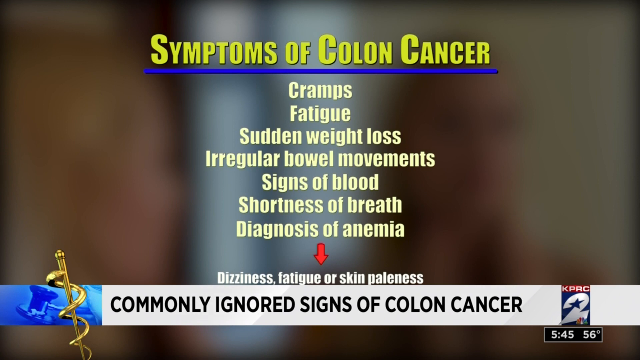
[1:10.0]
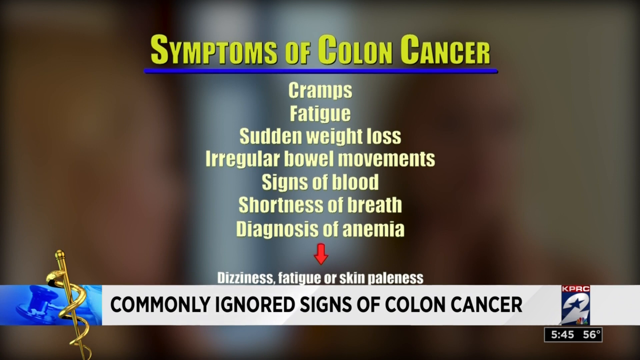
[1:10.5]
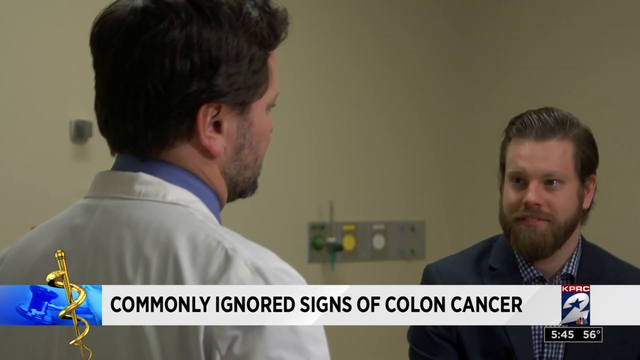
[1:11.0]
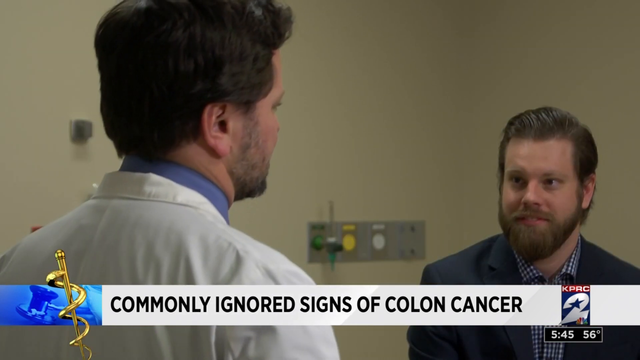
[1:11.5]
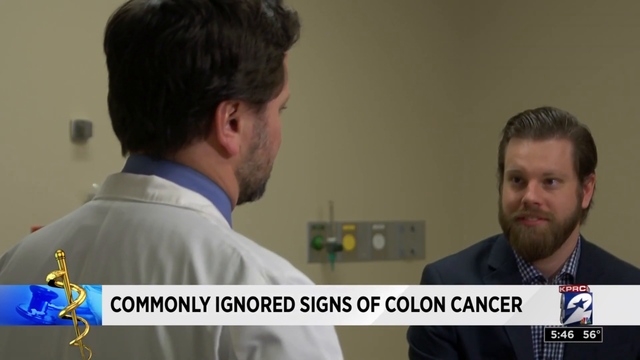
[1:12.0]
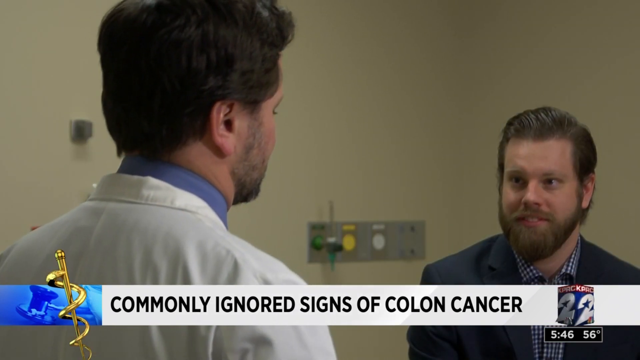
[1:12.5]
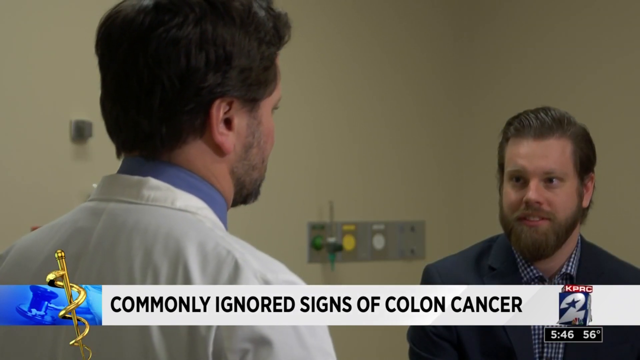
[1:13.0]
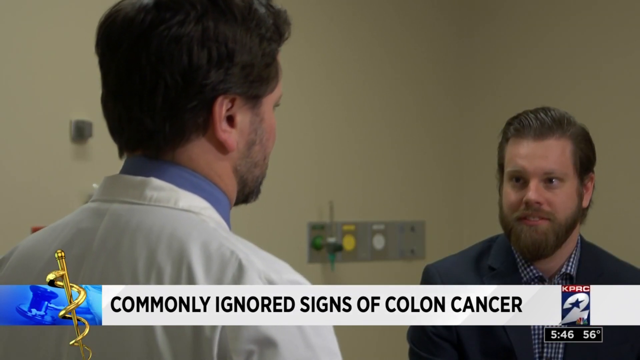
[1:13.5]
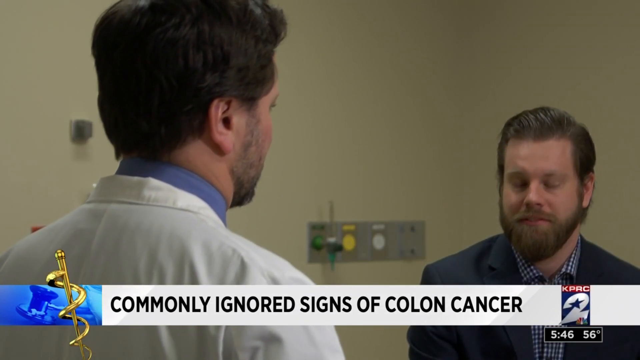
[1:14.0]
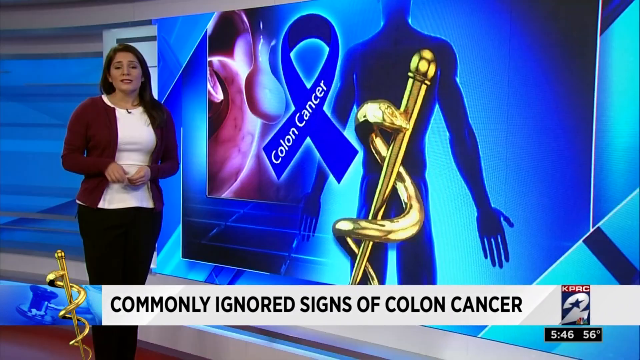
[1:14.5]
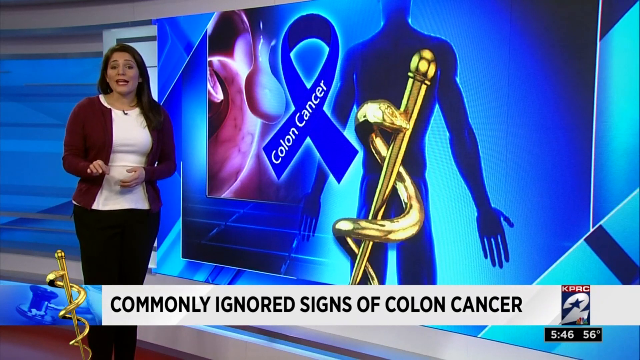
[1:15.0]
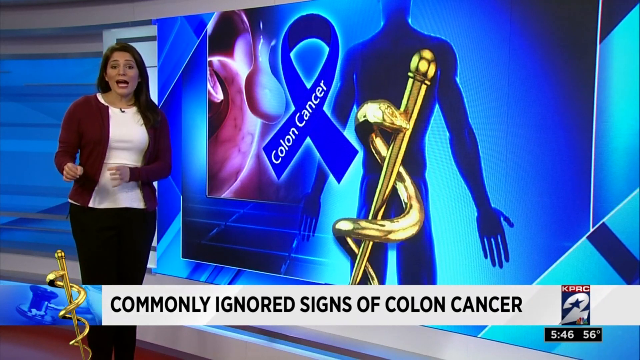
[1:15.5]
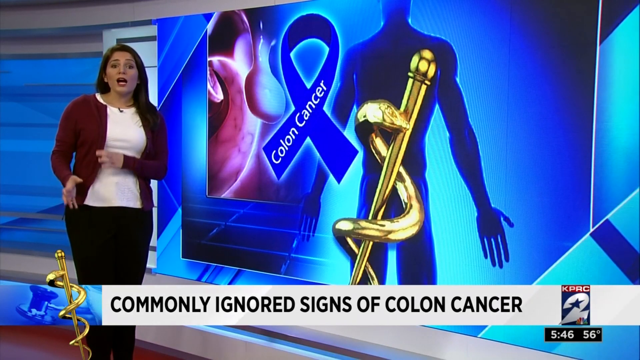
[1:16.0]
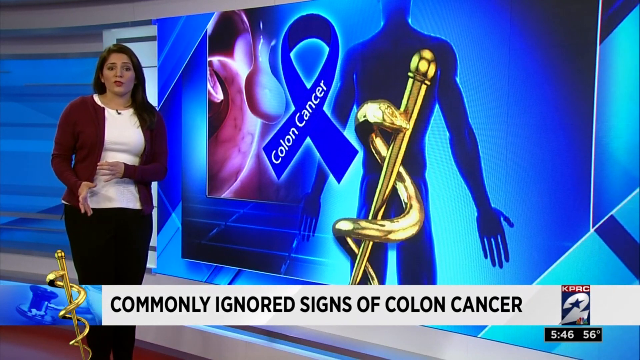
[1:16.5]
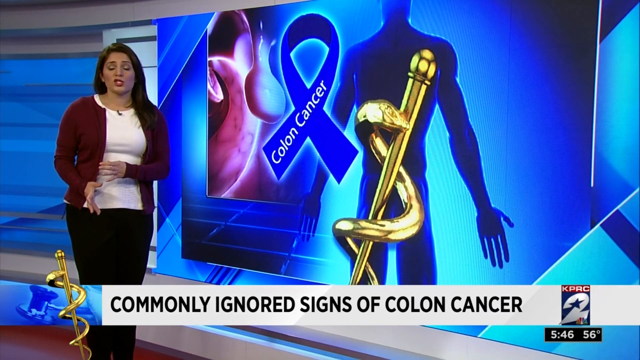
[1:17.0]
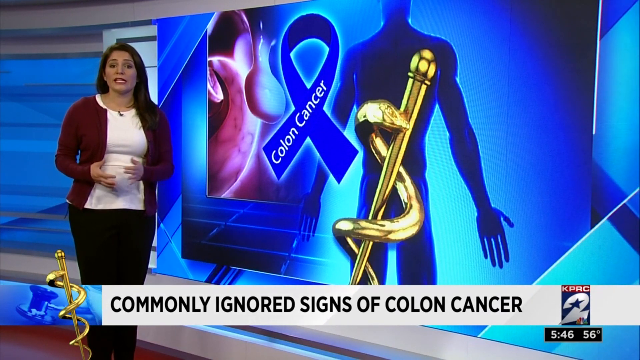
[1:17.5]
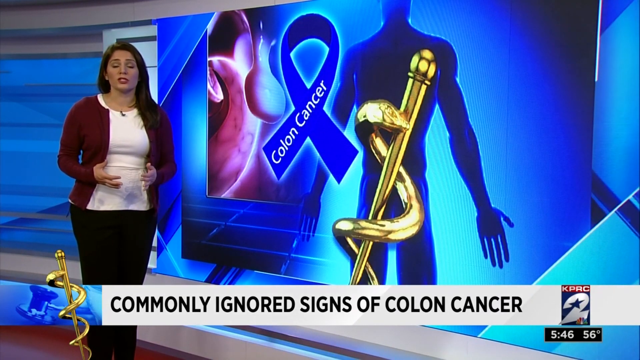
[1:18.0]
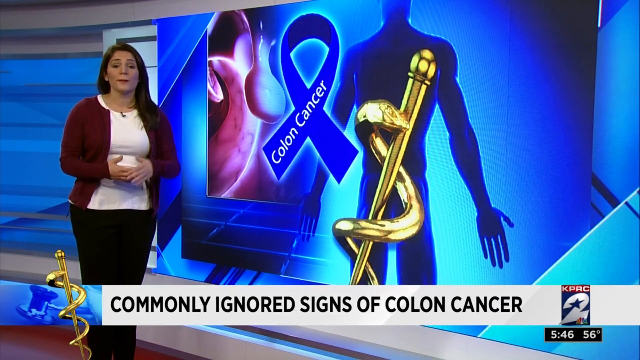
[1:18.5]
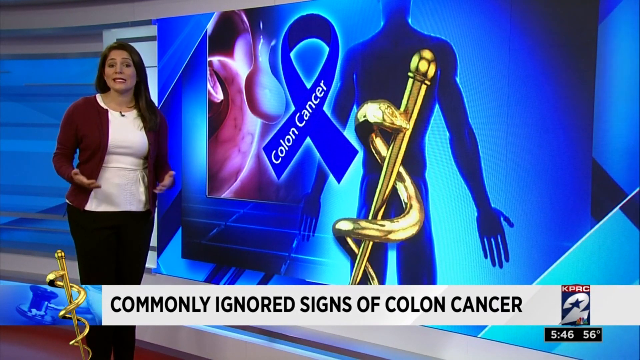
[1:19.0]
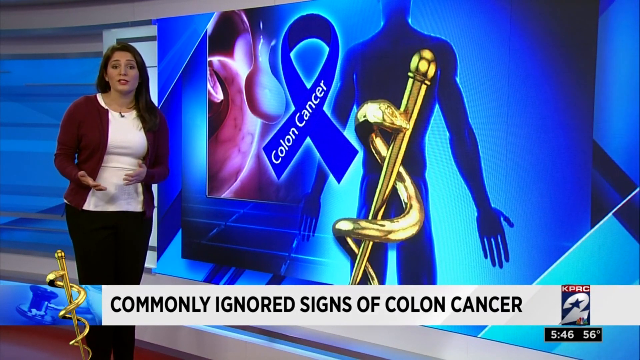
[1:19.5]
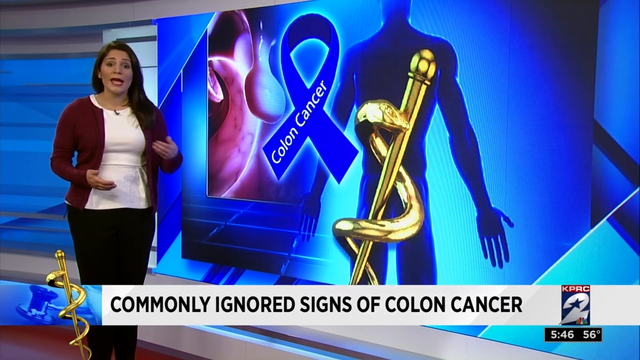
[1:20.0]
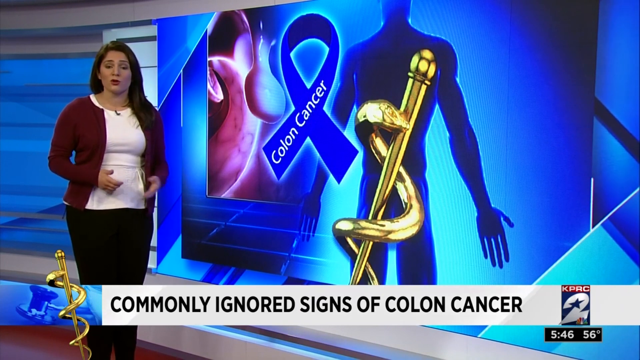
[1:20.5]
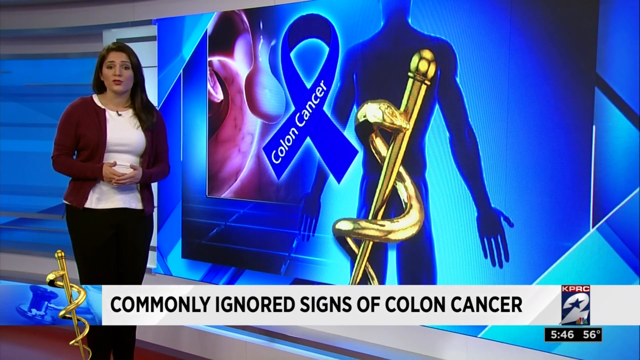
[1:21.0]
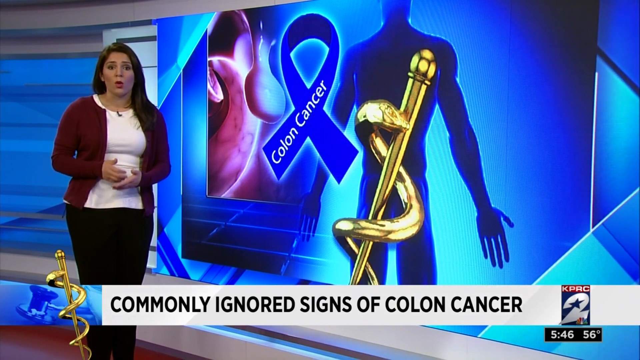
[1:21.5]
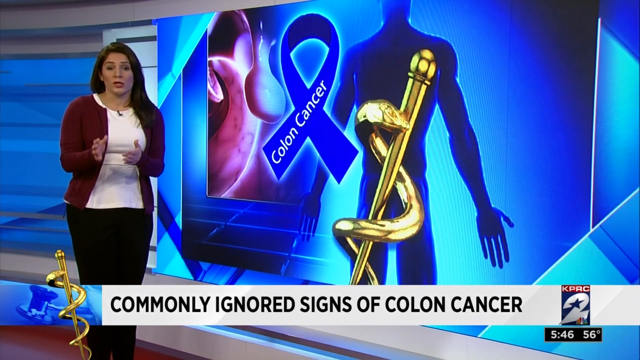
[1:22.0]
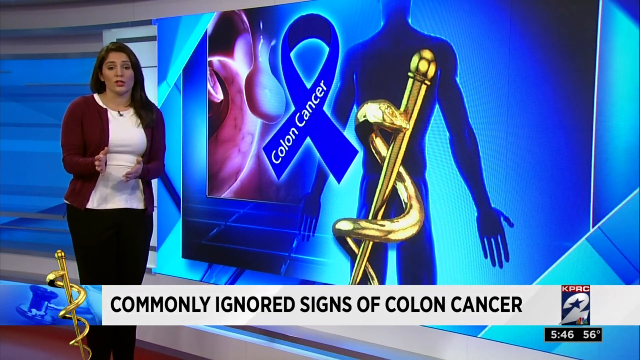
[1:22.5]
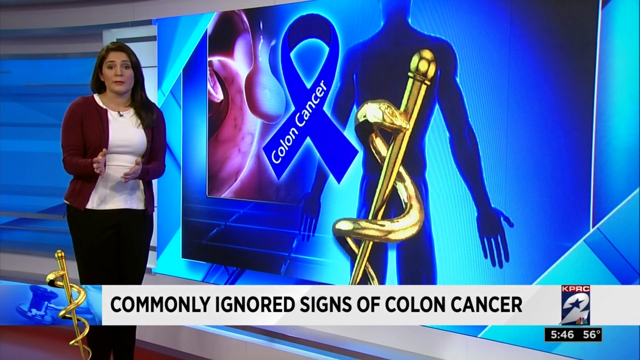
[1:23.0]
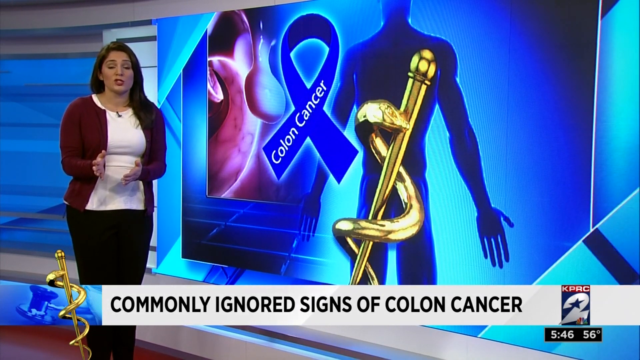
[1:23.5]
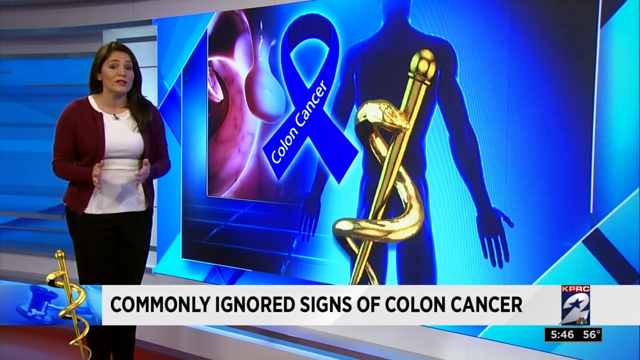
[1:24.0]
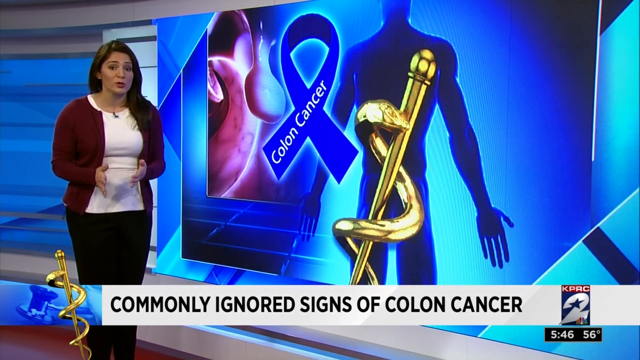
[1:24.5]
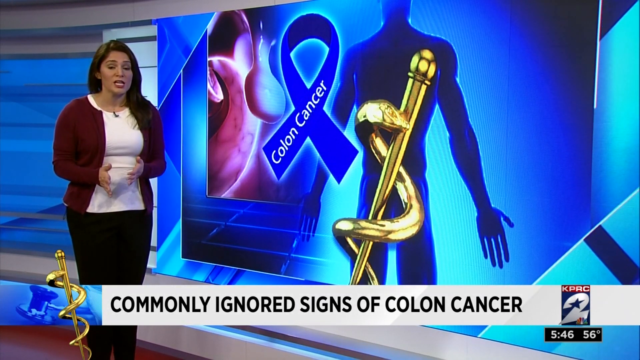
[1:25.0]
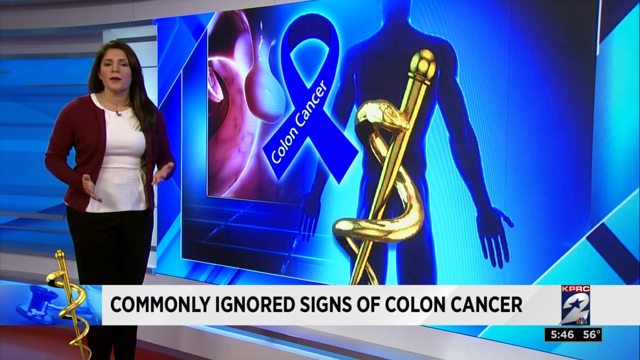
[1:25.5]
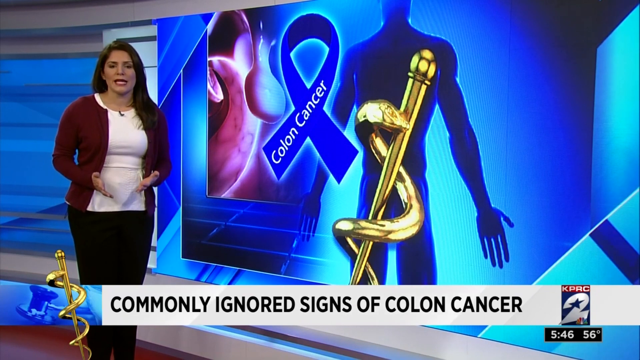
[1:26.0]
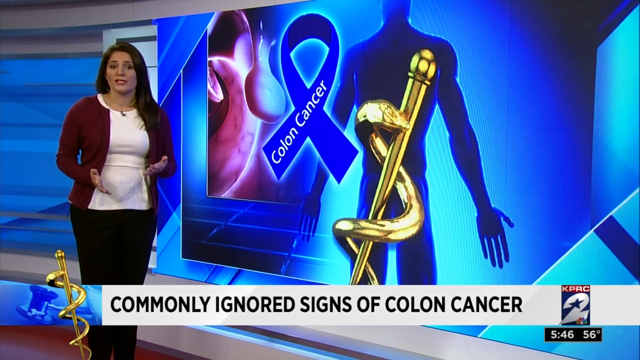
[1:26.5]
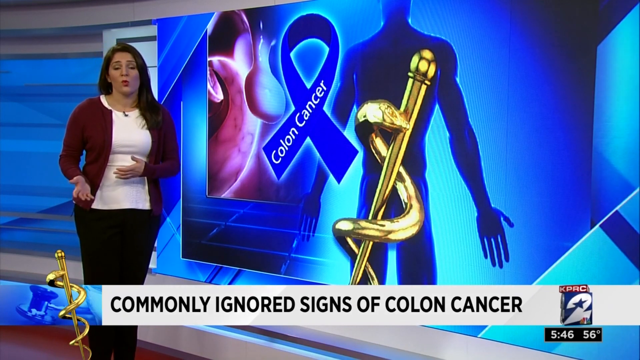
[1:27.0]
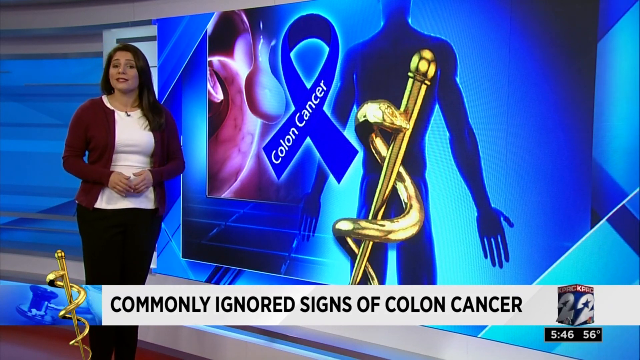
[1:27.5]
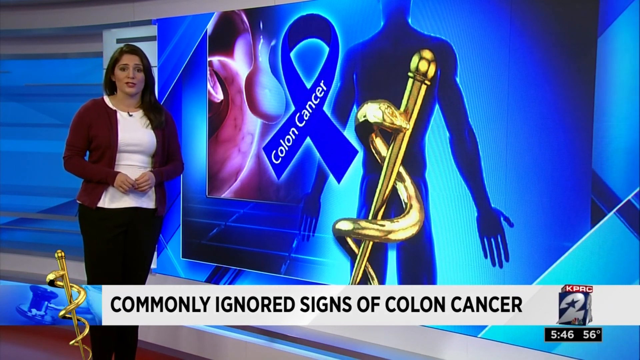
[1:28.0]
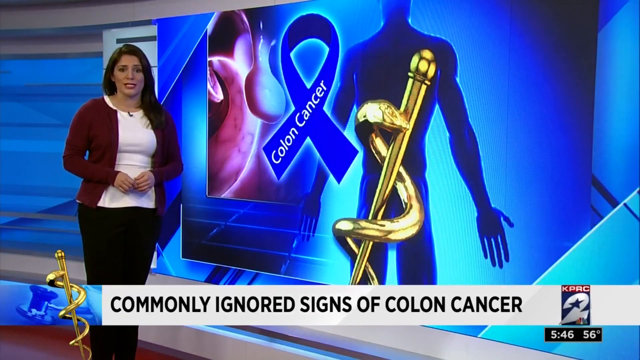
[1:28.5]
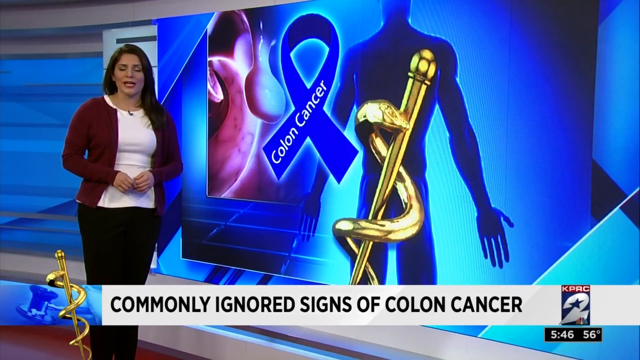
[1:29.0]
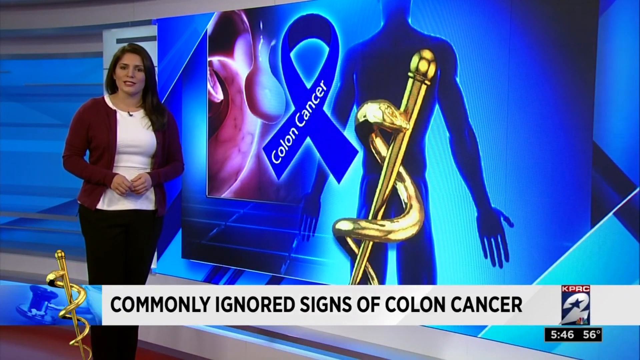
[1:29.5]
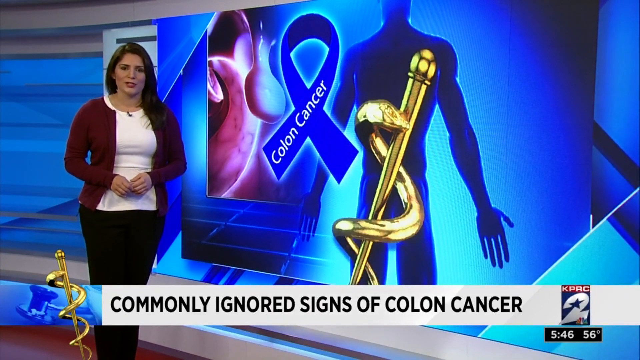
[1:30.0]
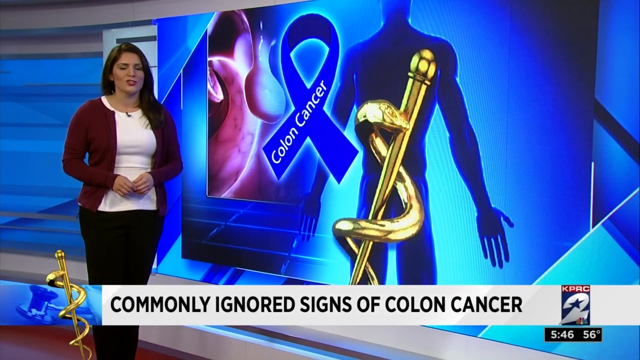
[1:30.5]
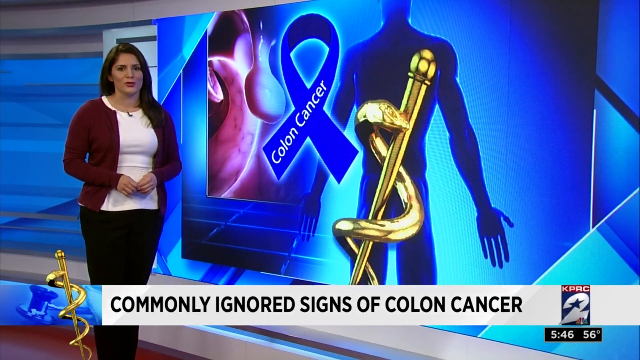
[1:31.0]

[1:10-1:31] The KPRC Channel 2 News video from Houston, Texas has a white banner at the bottom of the screen with the KPRC 2 logo and black text reading "commonly ignored signs of colon cancer". On a blurred screen, yellow letters read "symptoms of colon cancer" with a blue line under it, and below in smaller text: "cramps, fatigue, sudden weight loss, irregular bowel movements, signs of blood, shortness of breath, diagnosis of anemia". A doctor in a white jacket talks to someone else. Back in the newsroom, a woman wears black pants, a red sweater and a white shirt. Her left hand is next to her belly with her right hand below it, and she stands next to a screen showing a blue ribbon with white text reading "colon cancer", a blue outline of a man, and a picture of part of the gastrointestinal system.